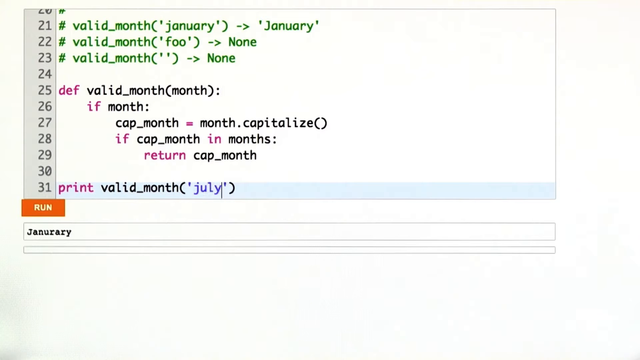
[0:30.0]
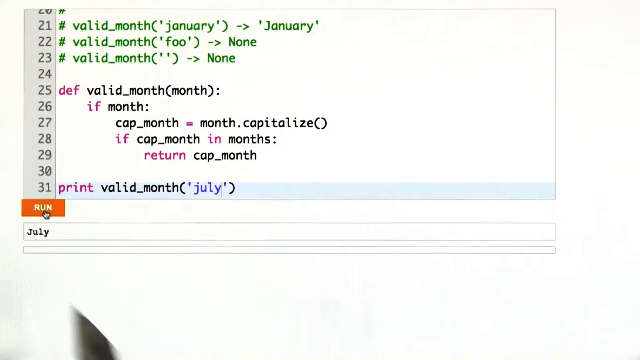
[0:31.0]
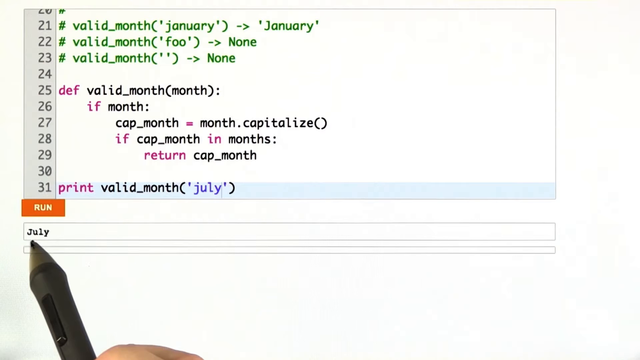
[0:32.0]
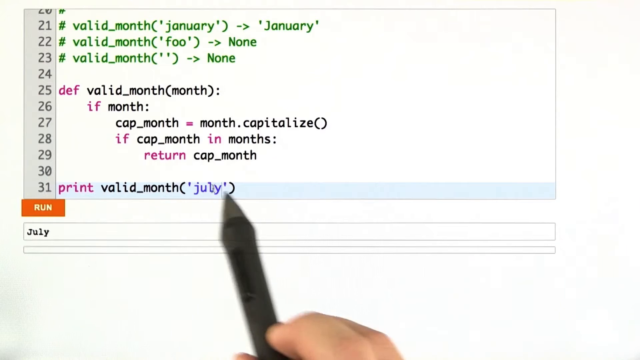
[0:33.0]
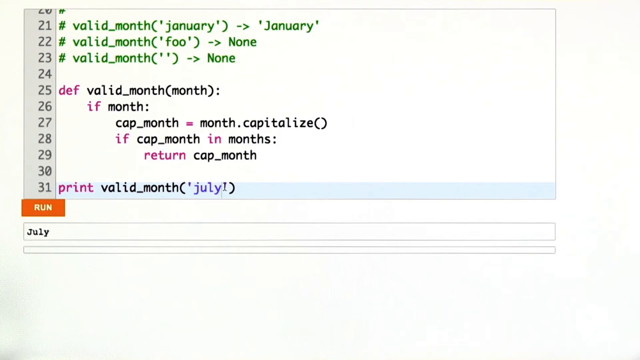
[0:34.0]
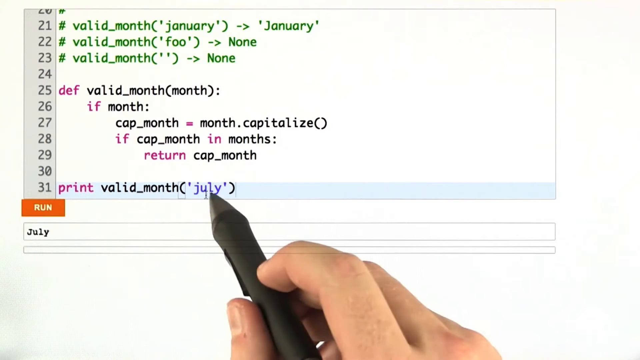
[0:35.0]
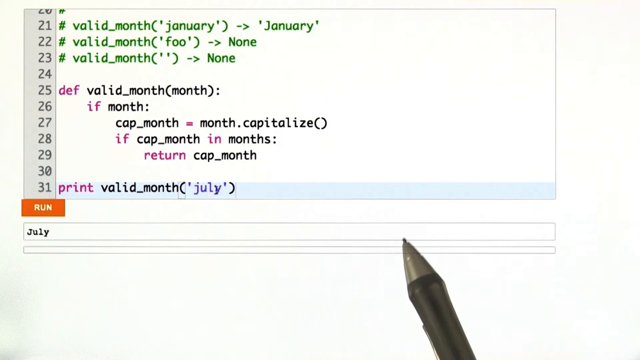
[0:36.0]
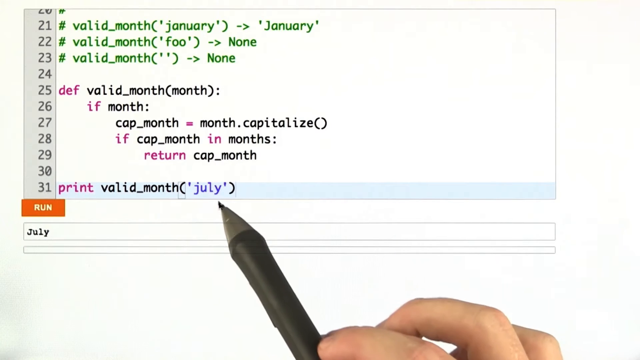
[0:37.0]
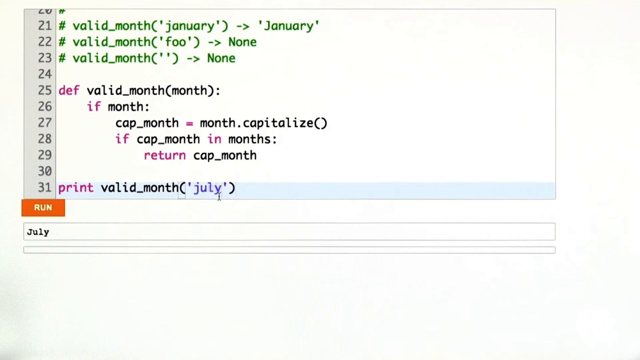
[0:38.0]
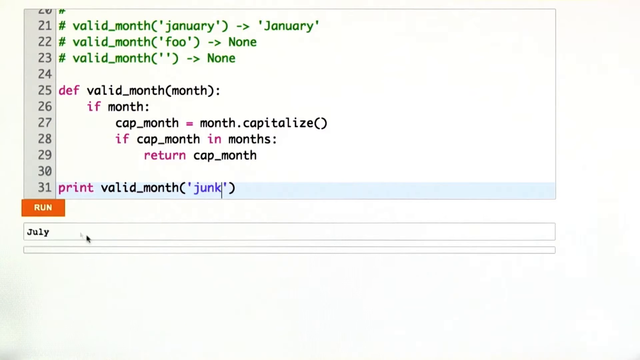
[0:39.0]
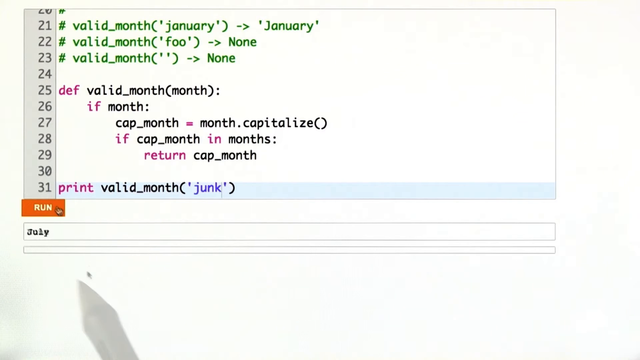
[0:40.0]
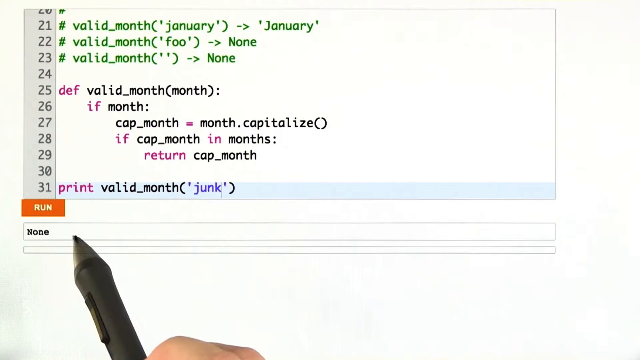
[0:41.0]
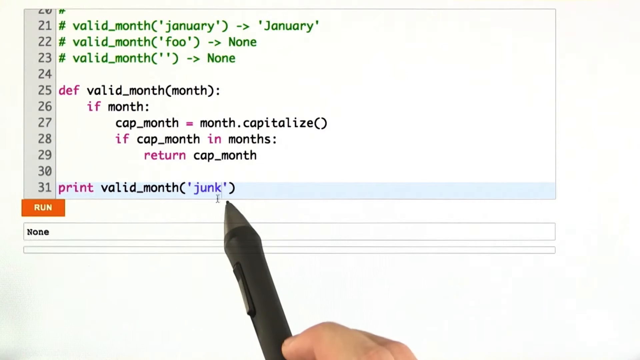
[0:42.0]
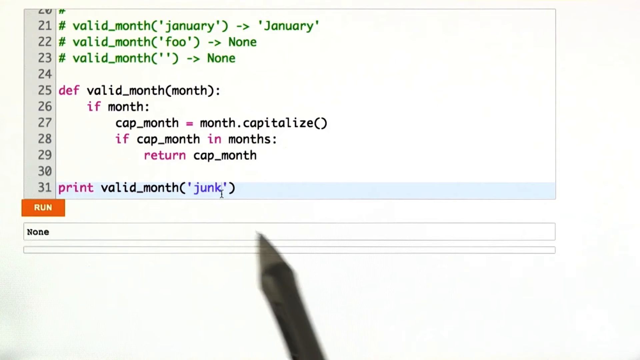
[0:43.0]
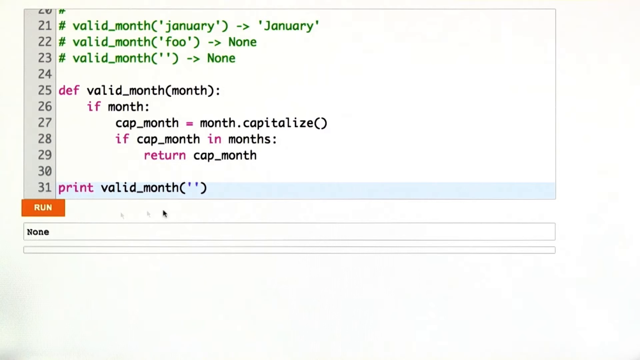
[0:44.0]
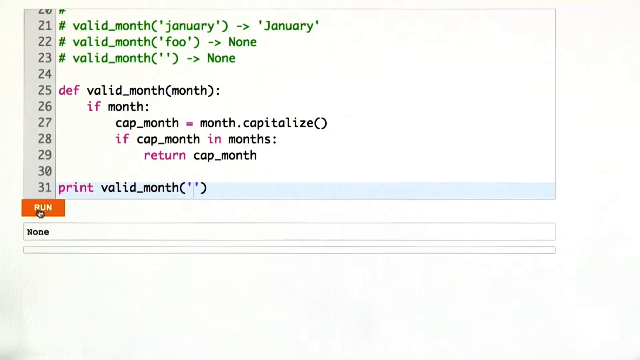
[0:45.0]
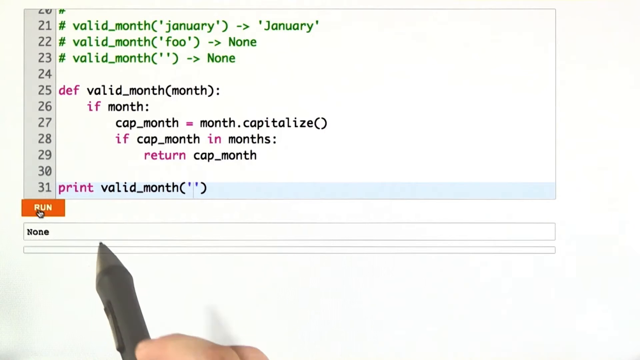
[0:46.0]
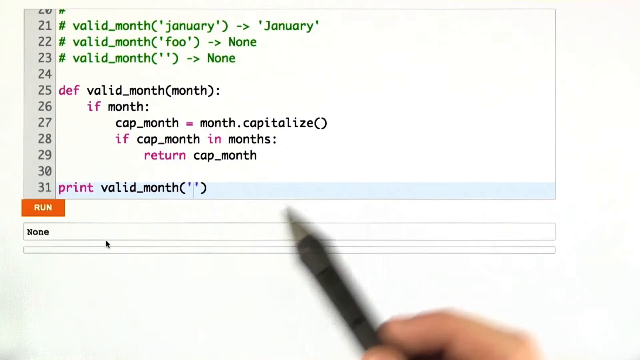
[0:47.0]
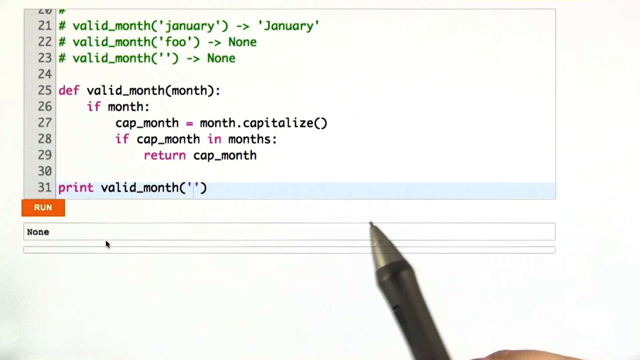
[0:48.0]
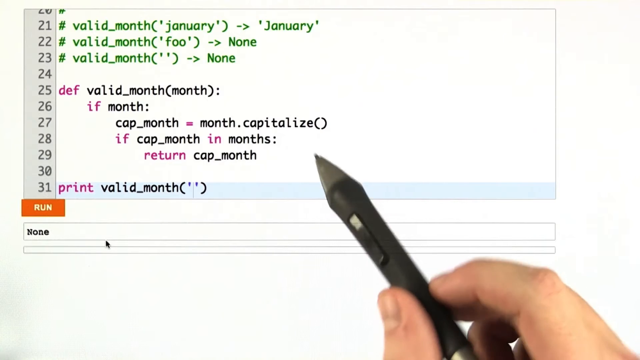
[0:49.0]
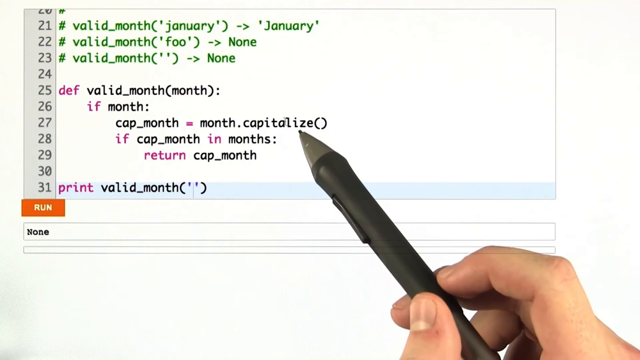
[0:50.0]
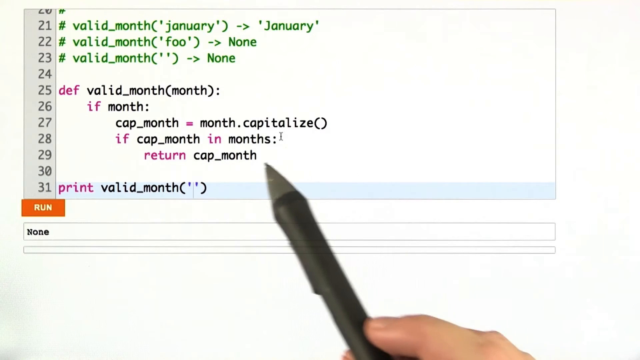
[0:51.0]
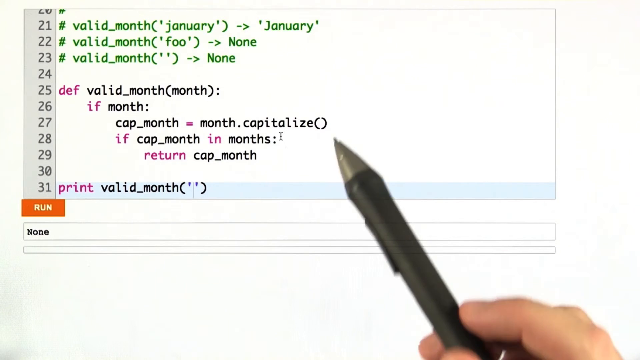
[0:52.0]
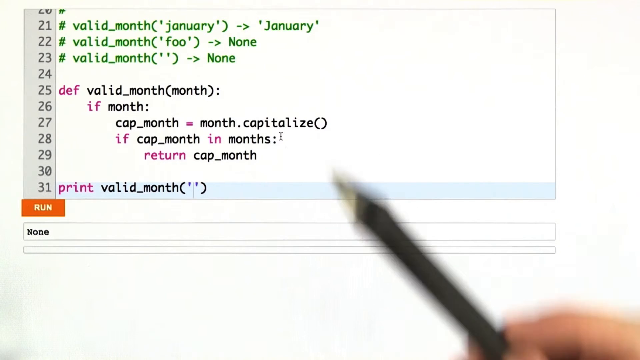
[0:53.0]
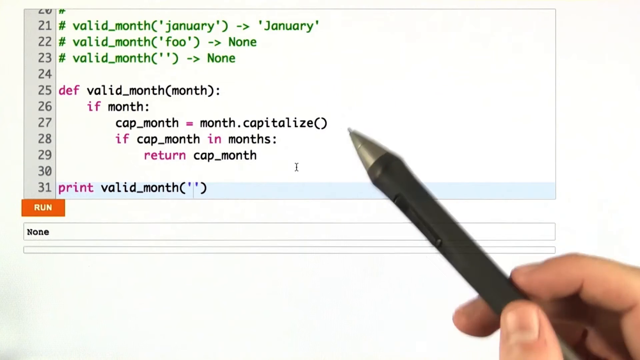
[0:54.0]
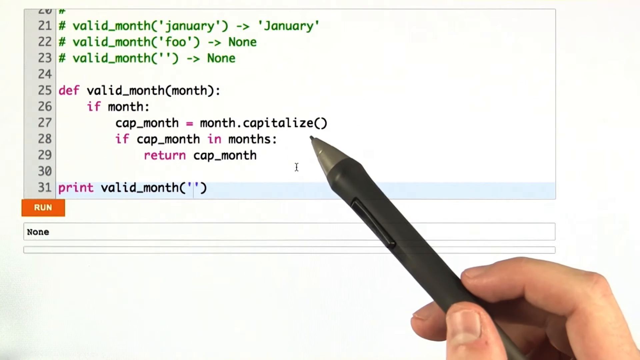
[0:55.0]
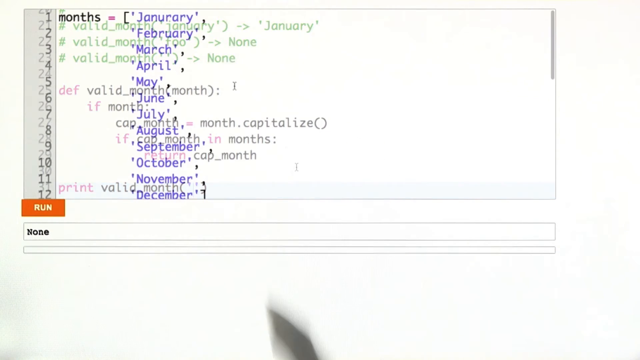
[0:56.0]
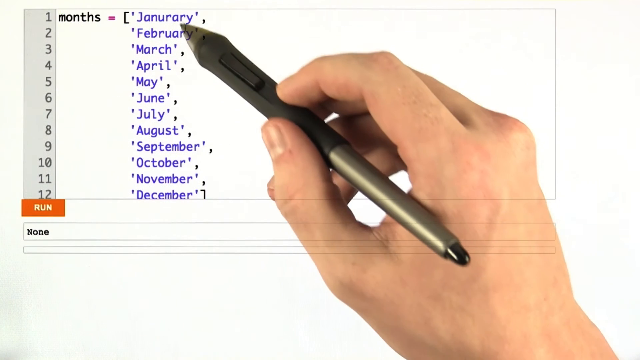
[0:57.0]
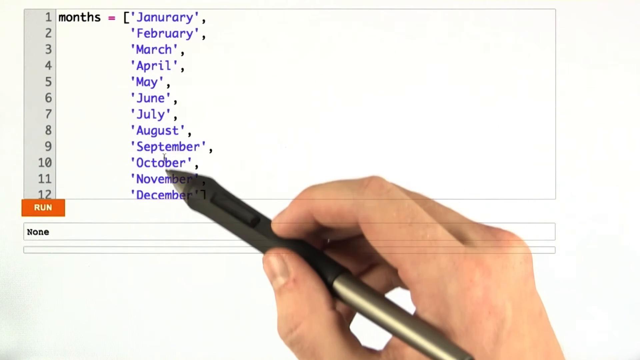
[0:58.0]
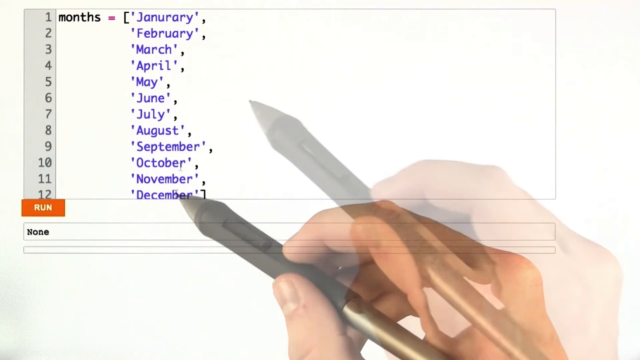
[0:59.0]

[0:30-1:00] A black digital pen hovers over what appears to be computer programming. The months of the year are listed in purple: January, February, March, April, May, June, July, August, September, October, November, December. On the screen, the top lines, numbered 21, 22 and 23, are printed in green. On row 25 the definition is in pink and "valid month" is in black. Further down is a light blue line that says "print" in pink followed by "valid month" with January misspelled; the month is replaced with July. The pen then presses an orange button labeled "RUN", the program runs, and the month January appears at the bottom of the screen.